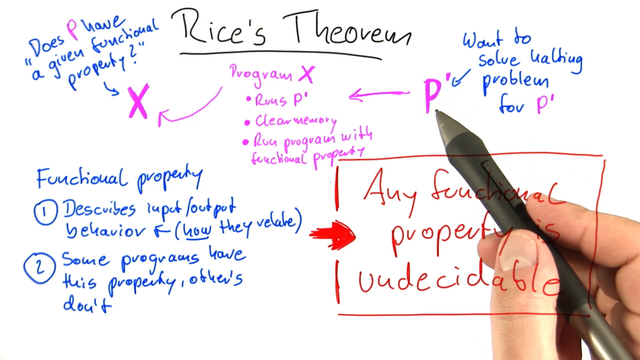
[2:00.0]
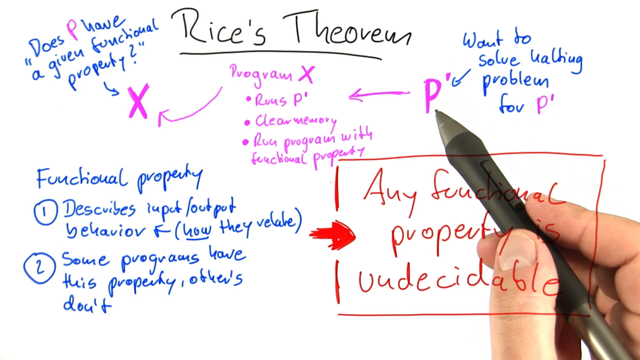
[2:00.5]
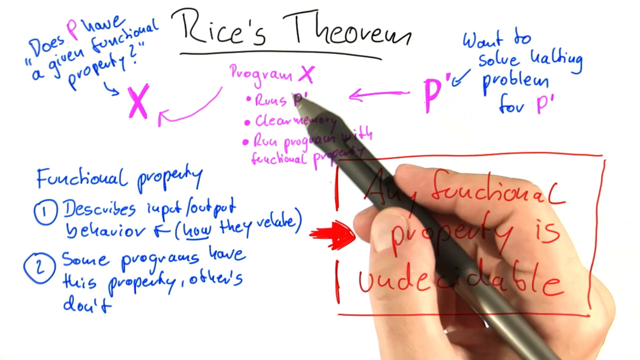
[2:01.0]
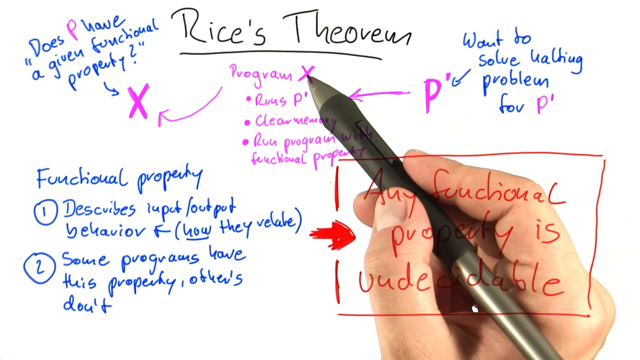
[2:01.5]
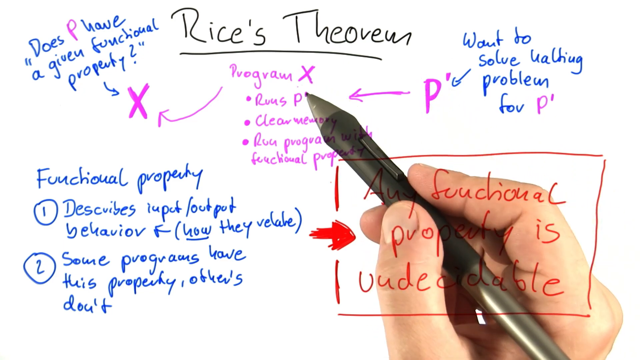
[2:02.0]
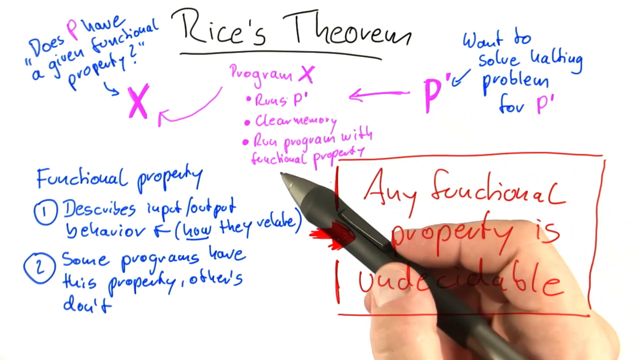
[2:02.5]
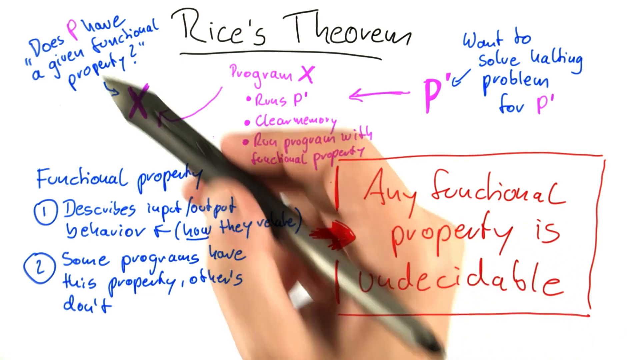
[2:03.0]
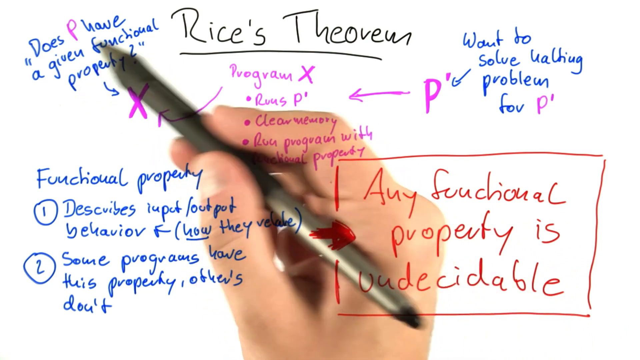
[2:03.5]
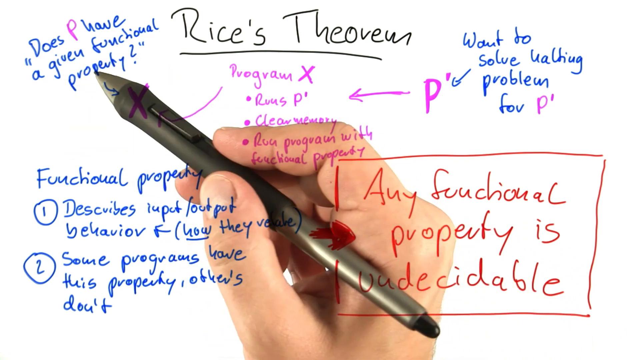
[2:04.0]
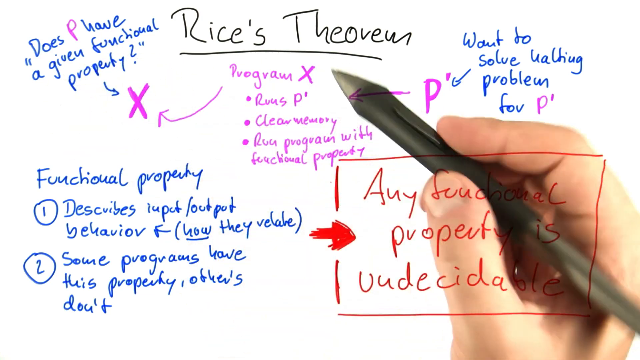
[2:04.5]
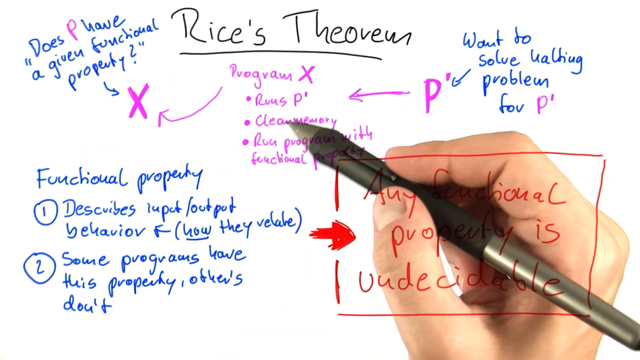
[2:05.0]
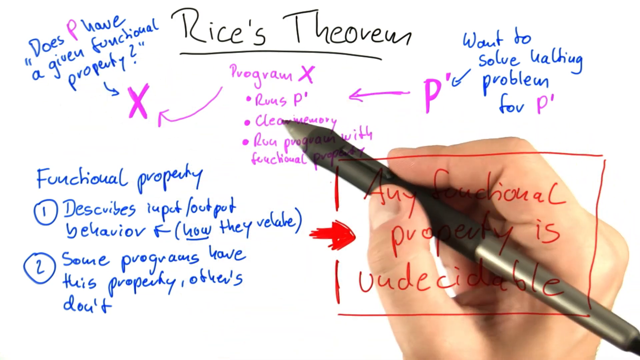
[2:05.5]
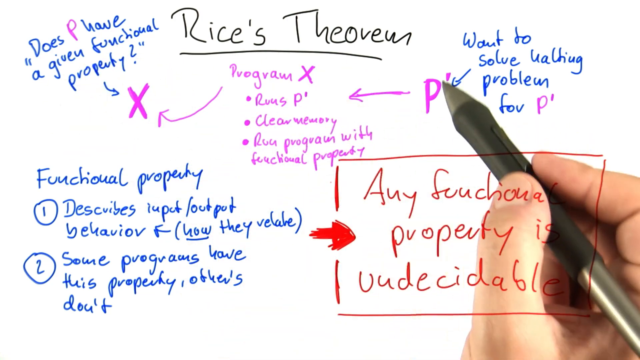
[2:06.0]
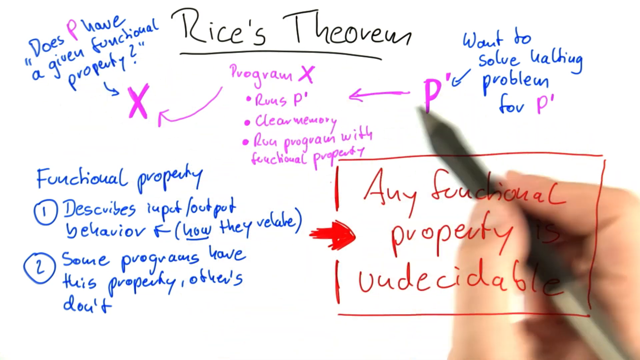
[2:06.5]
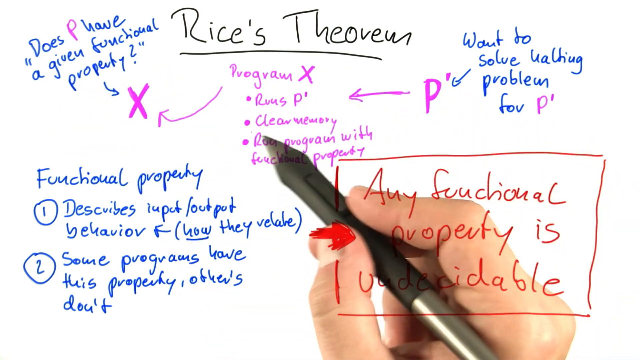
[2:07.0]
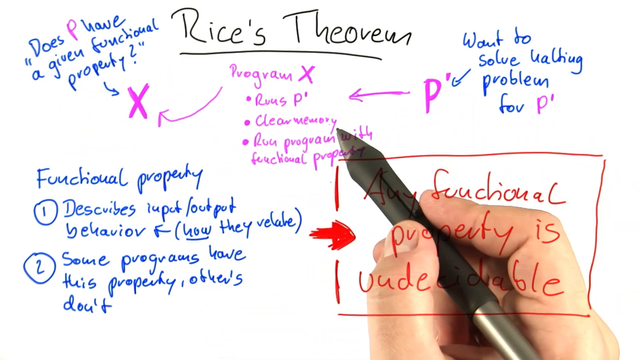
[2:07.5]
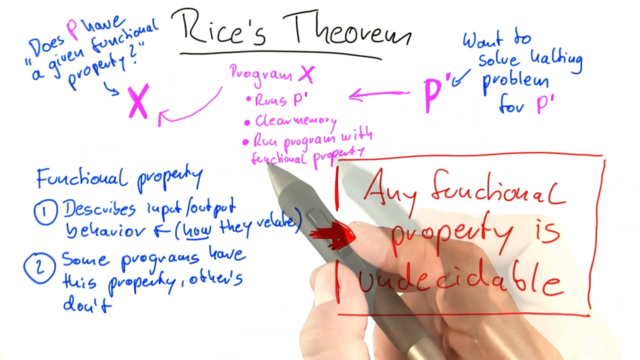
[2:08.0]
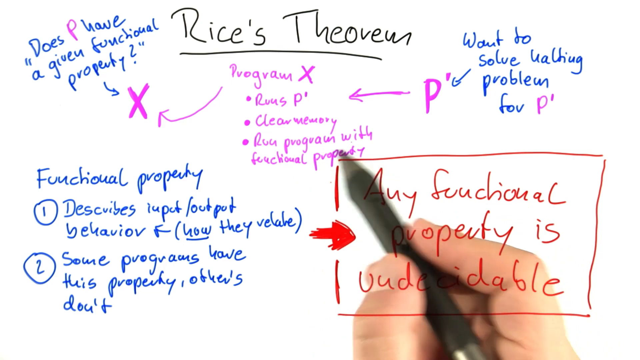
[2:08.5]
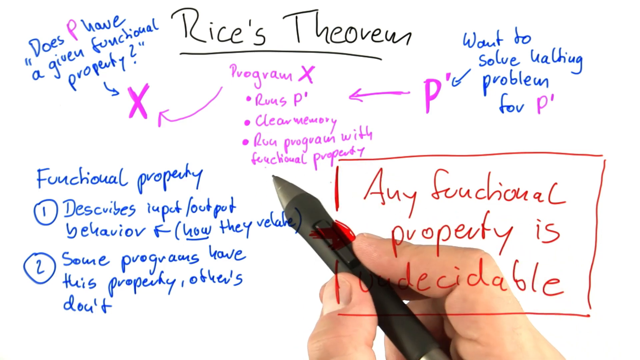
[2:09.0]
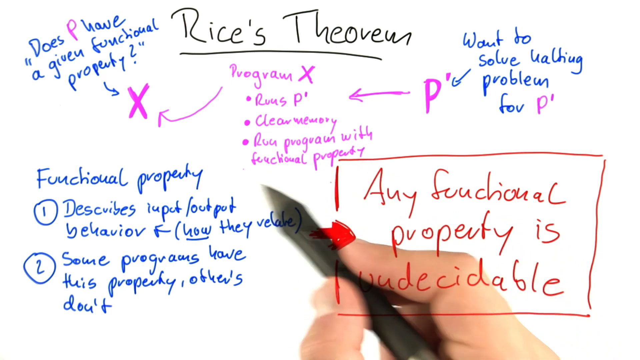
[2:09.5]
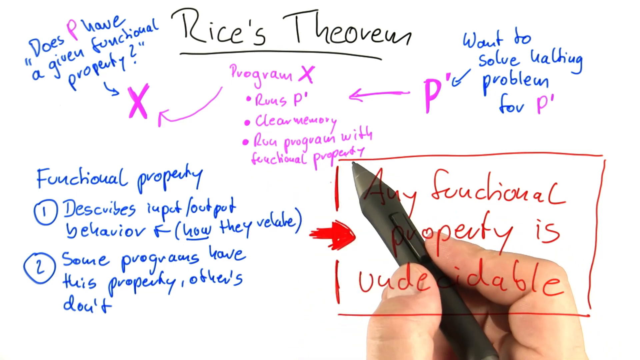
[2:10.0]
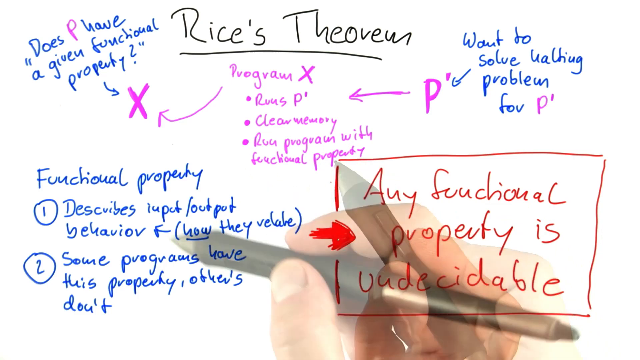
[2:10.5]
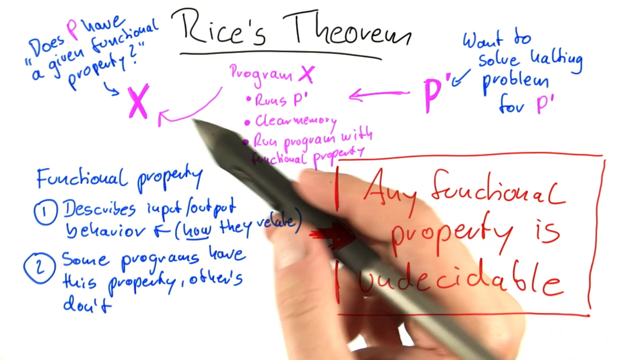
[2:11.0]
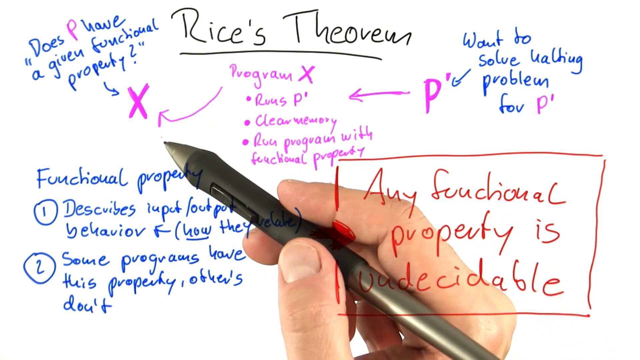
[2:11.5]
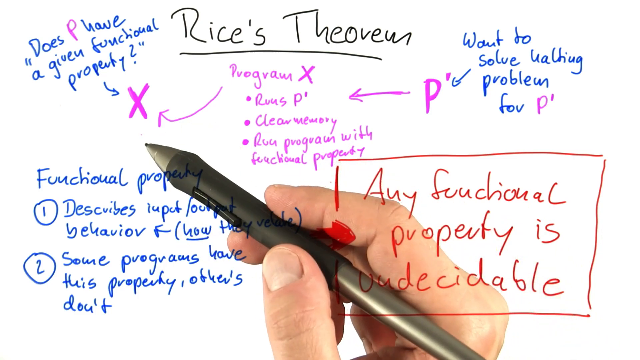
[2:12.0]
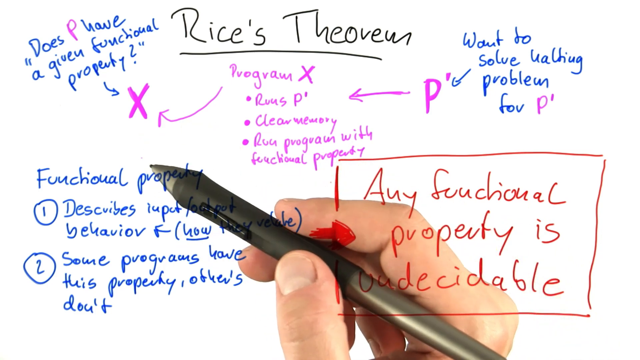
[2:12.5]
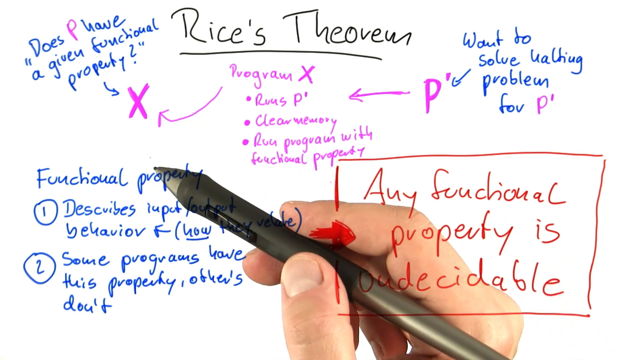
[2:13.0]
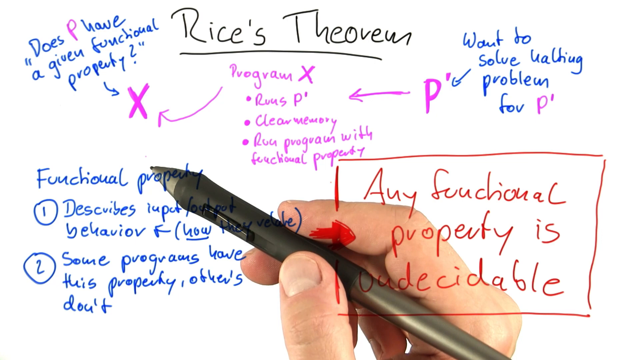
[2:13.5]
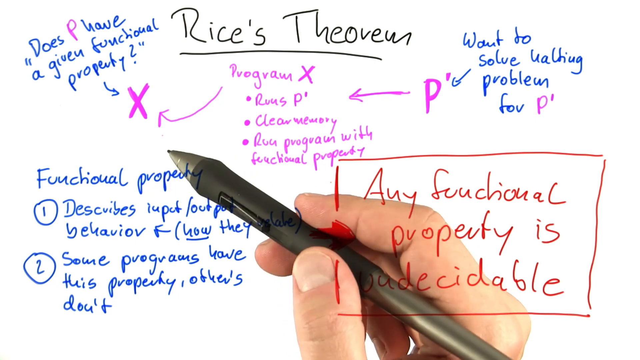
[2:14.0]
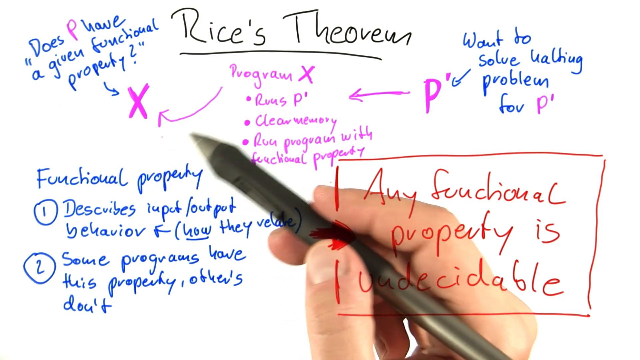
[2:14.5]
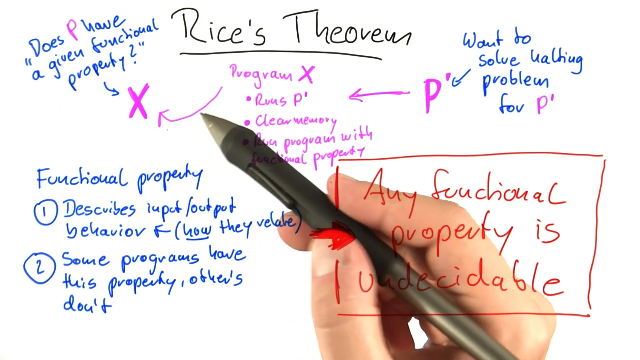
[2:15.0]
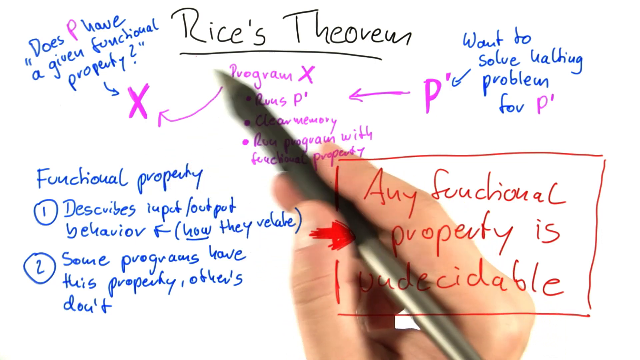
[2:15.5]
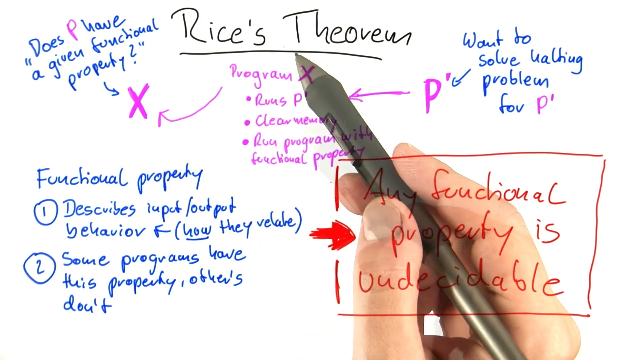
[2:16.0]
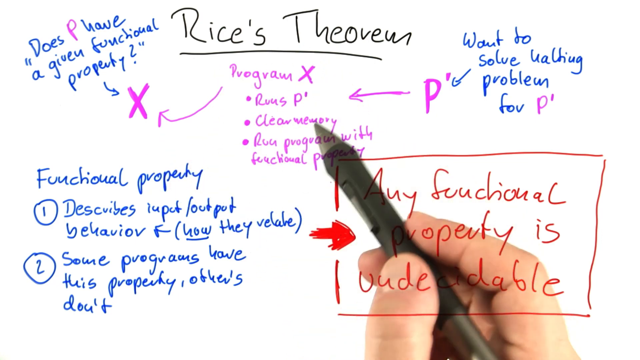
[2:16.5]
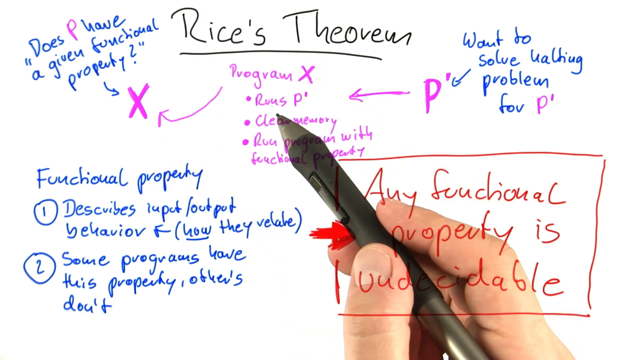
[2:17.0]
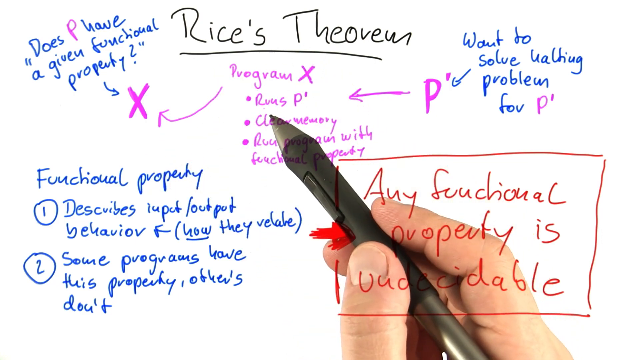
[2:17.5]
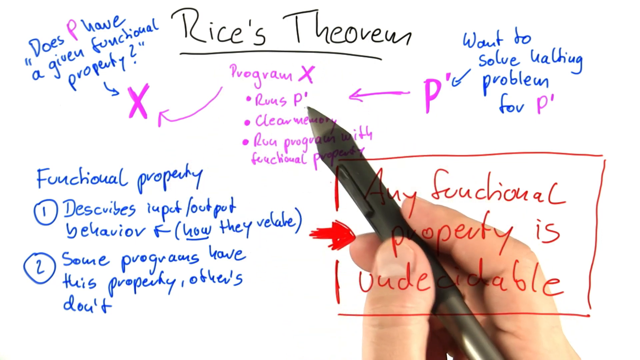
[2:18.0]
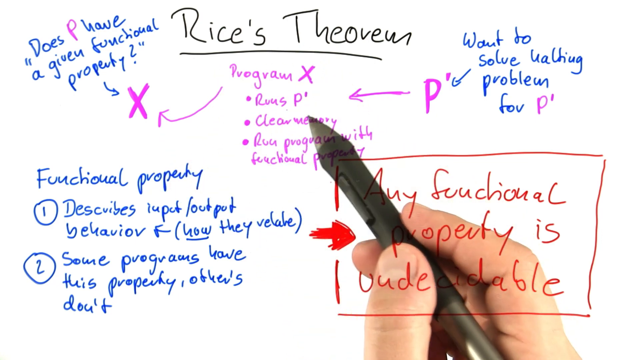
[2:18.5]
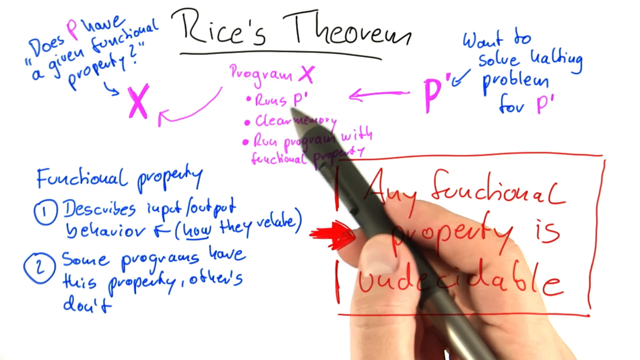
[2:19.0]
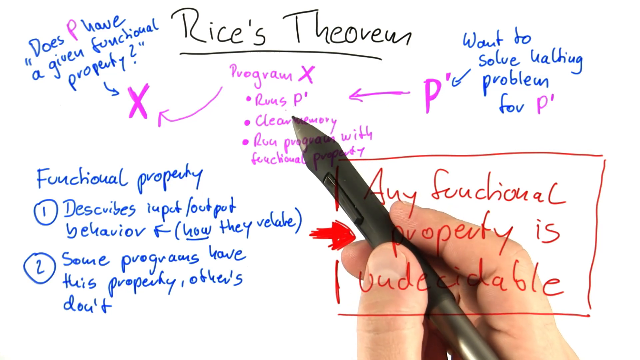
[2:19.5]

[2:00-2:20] Black text at the top of a white background says "Rice's Theorem." On the left, blue and purple text in quotation marks says "does p have a given functional property," with a blue arrow pointing to a purple x, and a purple arrow also pointing to it. That purple arrow is linked to purple text that says "program x" with bullets that say "ruse p," "clear memory," and "root program with functional property," with a purple arrow pointing to that and a purple p next to it. Blue text says "want to solve waiting problem for p," with a blue arrow pointing to a p. Blue text says "functional property 1 describes input output behavior how they relate and 2 some programs have this property and others don't." A red outlined box has a red arrow pointing right, with red text that says "any functional property is undecidable." A man's hand holding a pen points to the purple text in the center and the blue text in the top left corner, and continues to point at things.